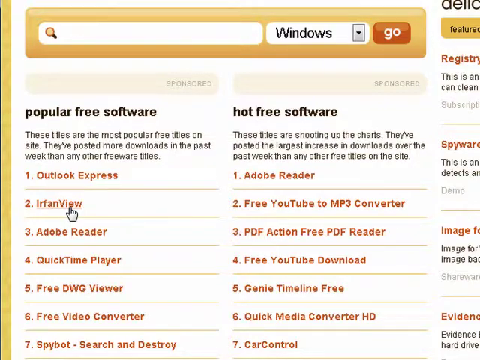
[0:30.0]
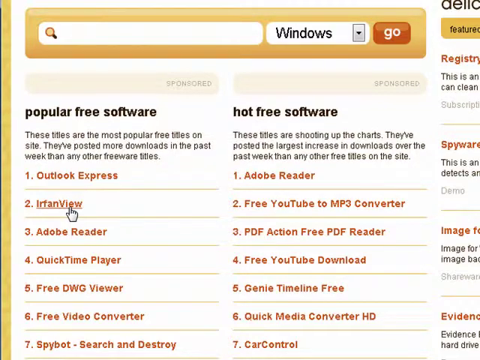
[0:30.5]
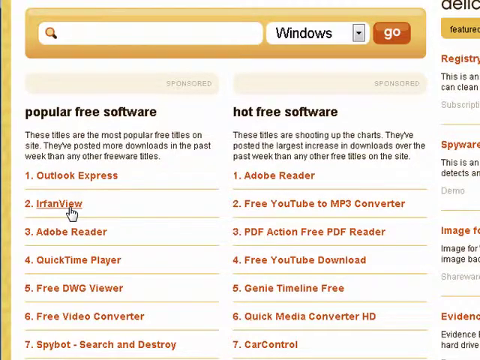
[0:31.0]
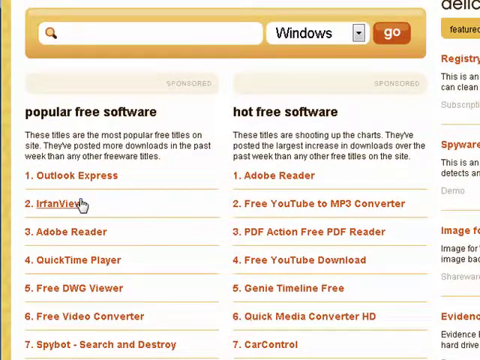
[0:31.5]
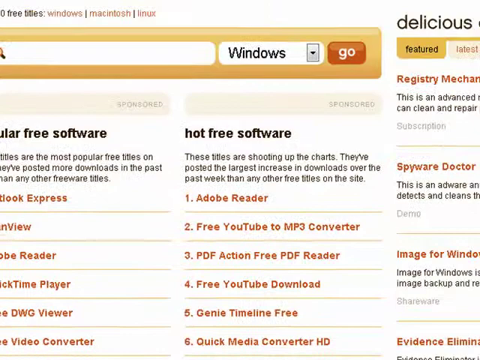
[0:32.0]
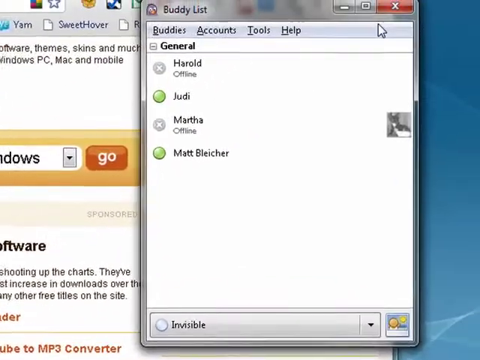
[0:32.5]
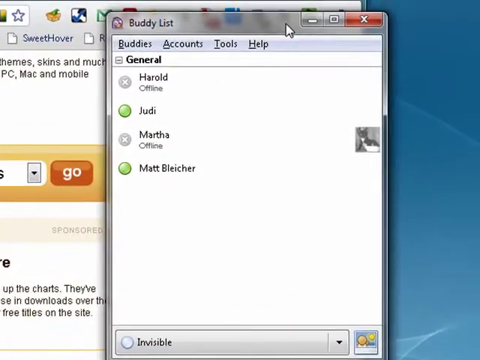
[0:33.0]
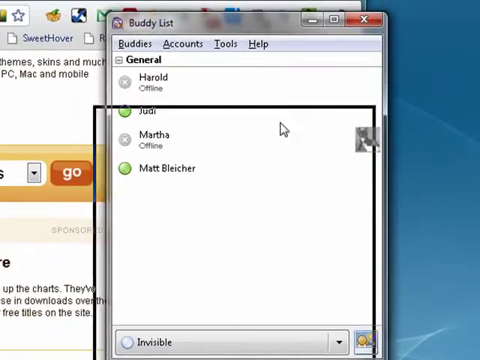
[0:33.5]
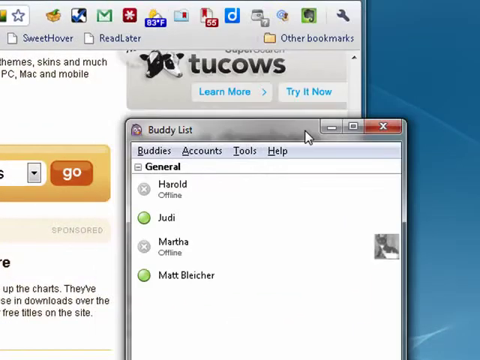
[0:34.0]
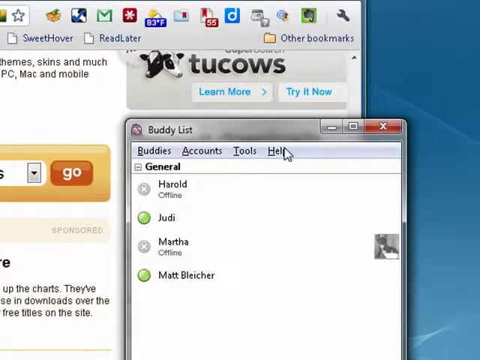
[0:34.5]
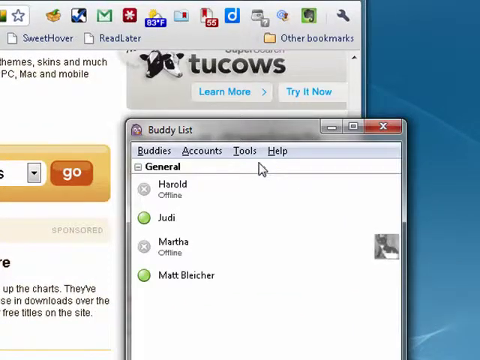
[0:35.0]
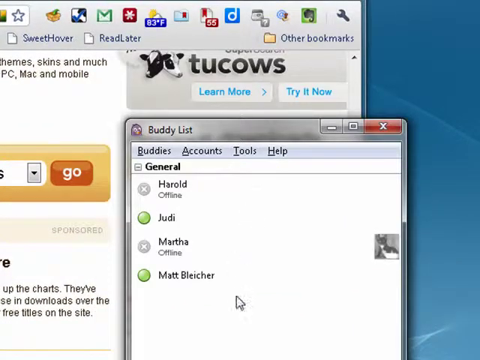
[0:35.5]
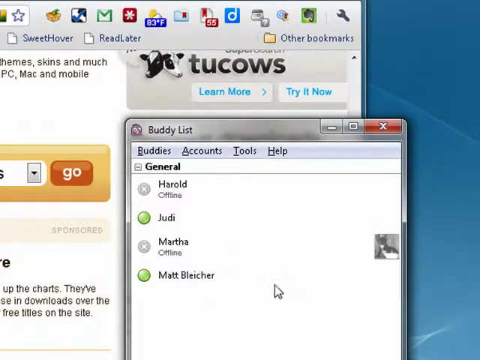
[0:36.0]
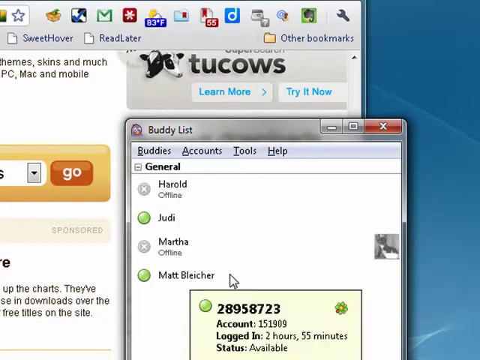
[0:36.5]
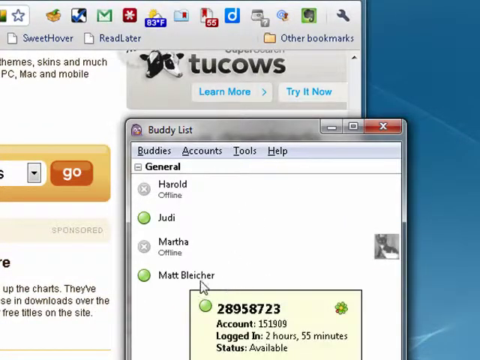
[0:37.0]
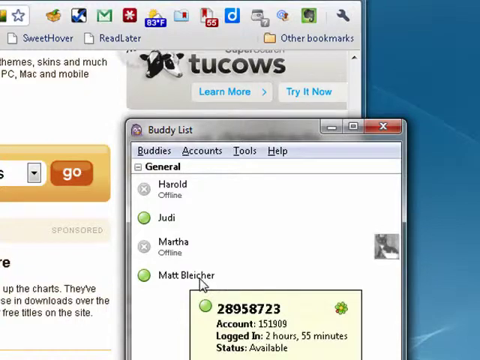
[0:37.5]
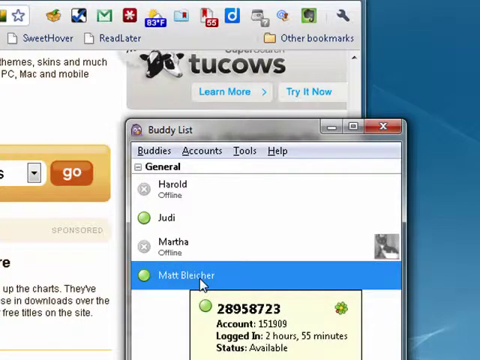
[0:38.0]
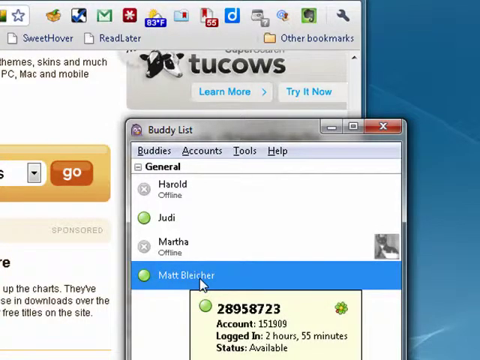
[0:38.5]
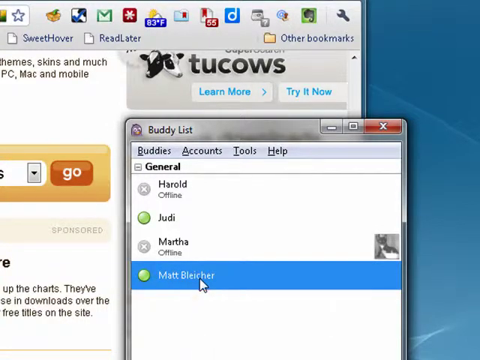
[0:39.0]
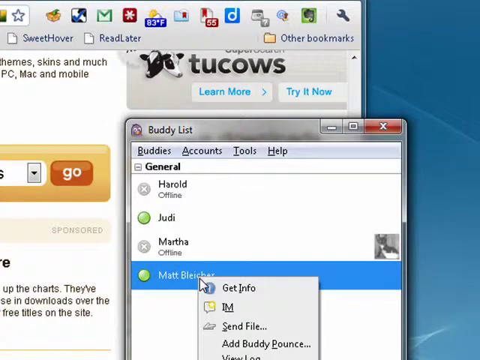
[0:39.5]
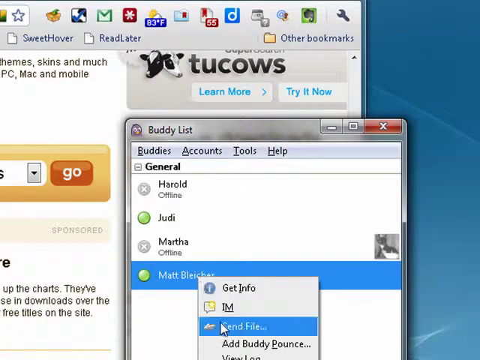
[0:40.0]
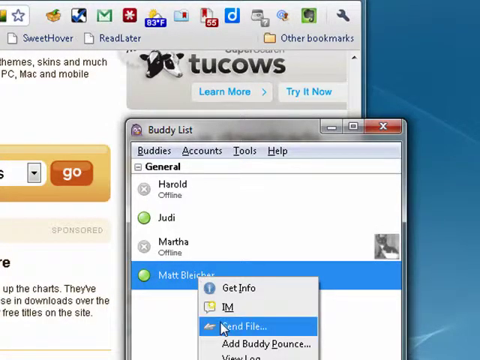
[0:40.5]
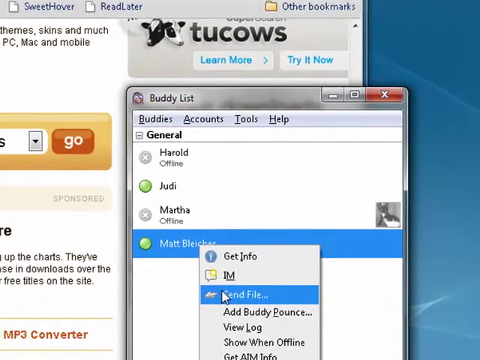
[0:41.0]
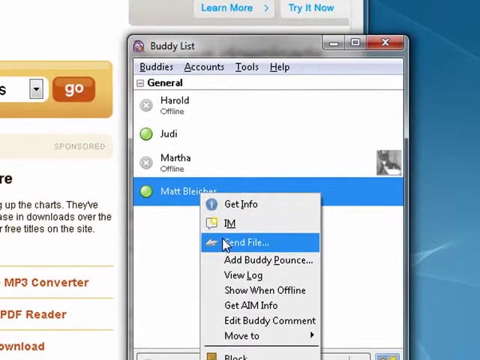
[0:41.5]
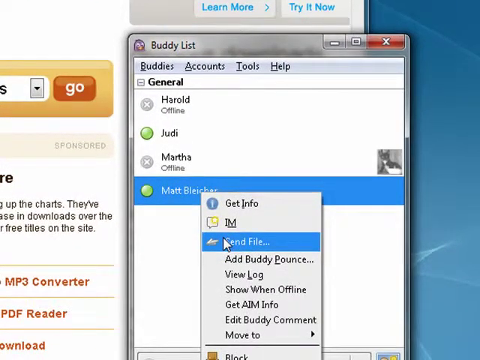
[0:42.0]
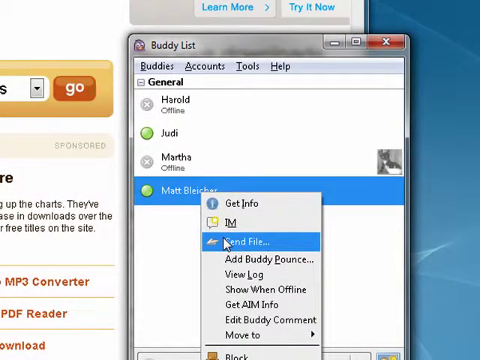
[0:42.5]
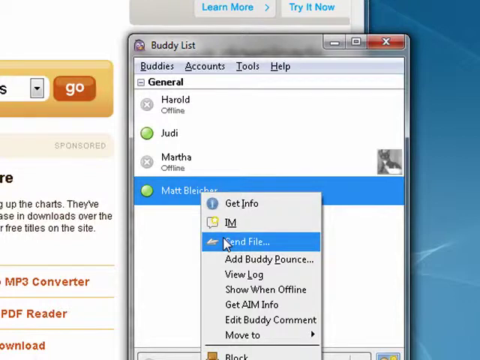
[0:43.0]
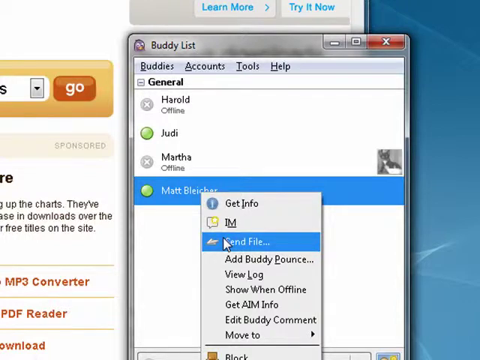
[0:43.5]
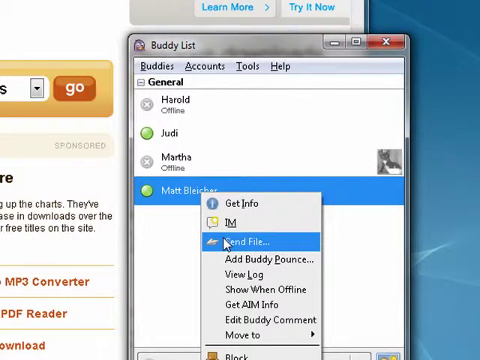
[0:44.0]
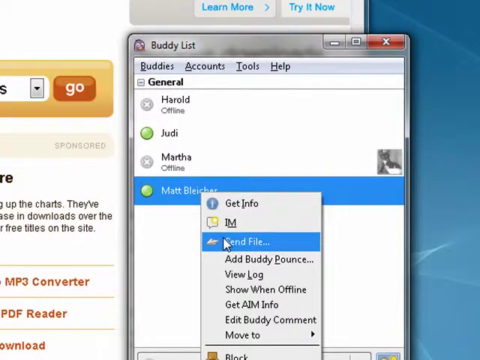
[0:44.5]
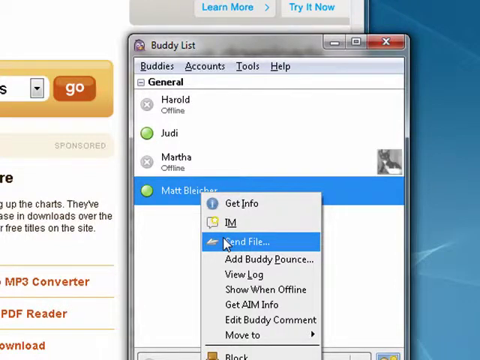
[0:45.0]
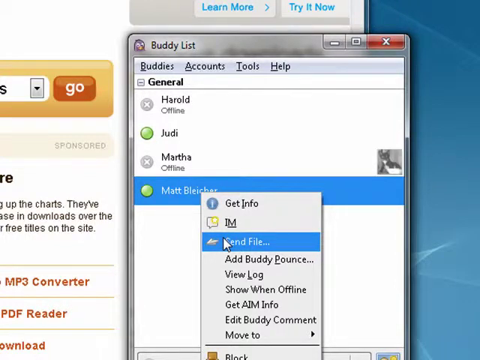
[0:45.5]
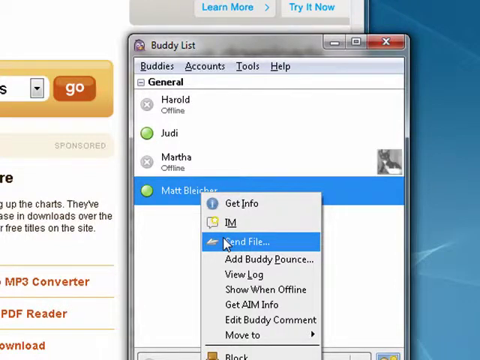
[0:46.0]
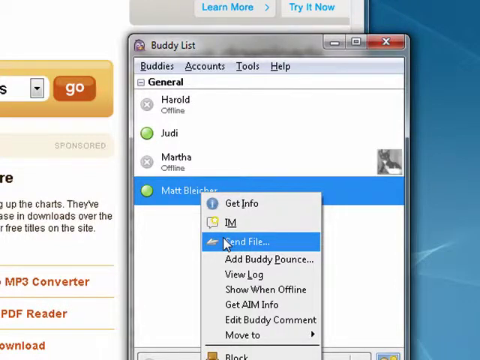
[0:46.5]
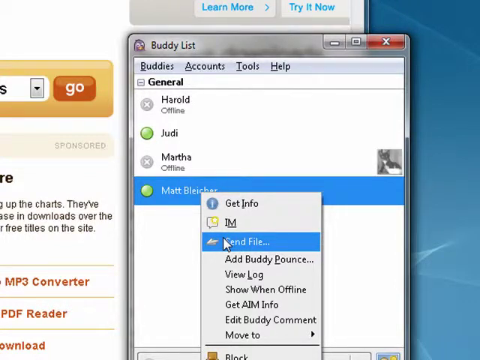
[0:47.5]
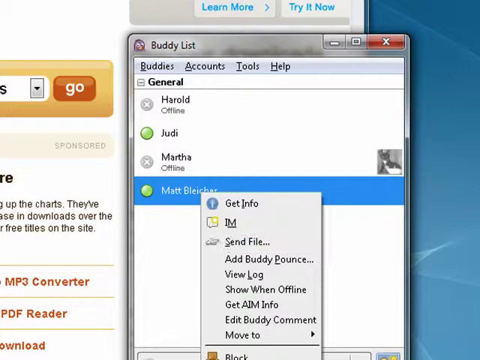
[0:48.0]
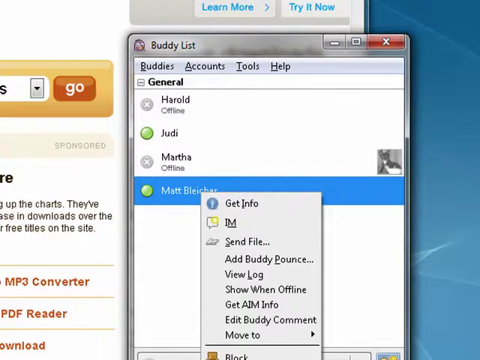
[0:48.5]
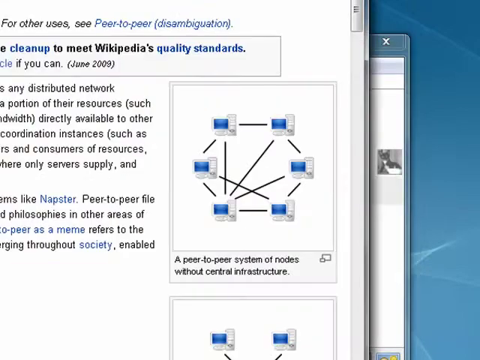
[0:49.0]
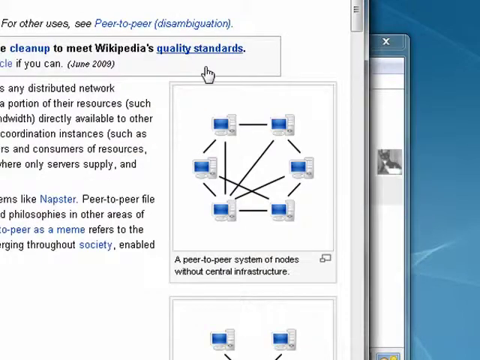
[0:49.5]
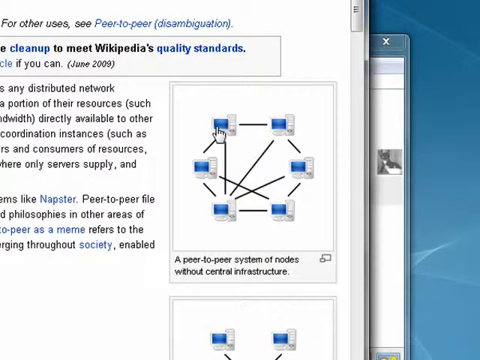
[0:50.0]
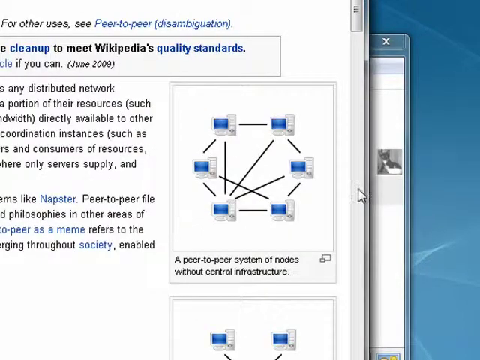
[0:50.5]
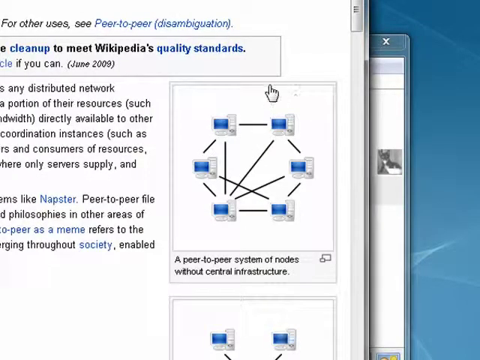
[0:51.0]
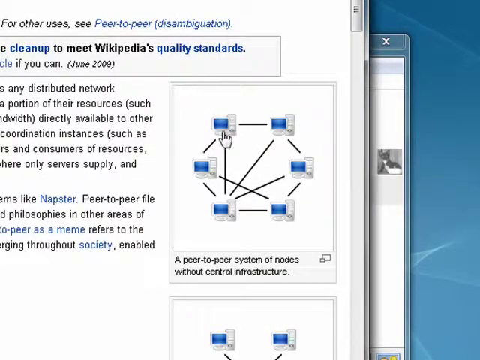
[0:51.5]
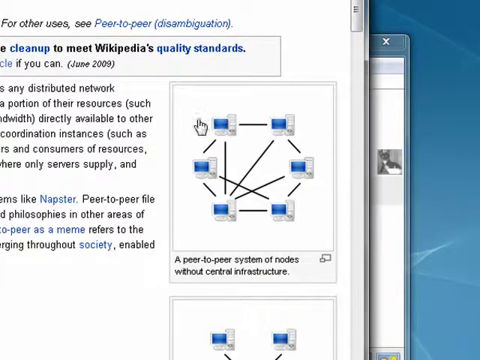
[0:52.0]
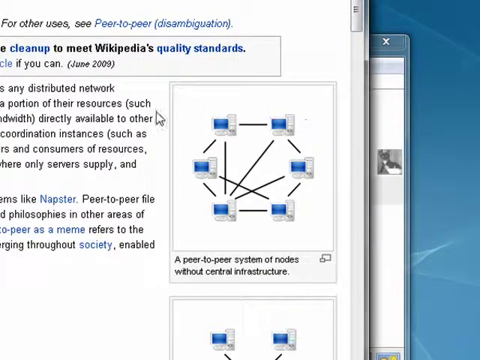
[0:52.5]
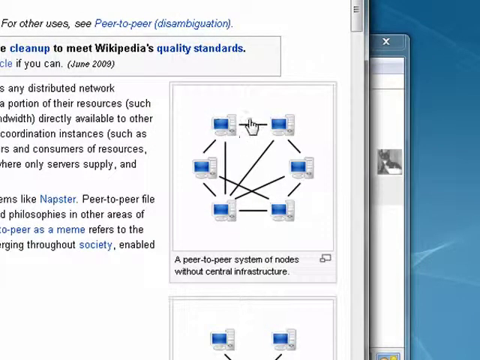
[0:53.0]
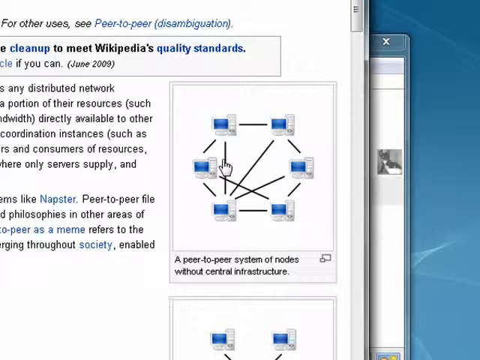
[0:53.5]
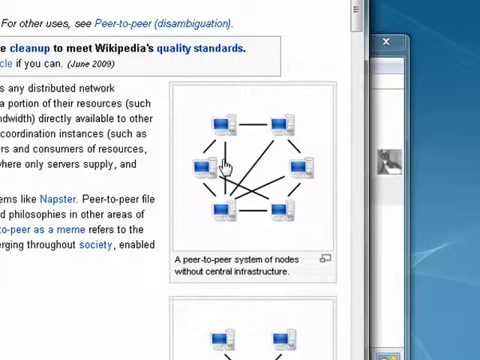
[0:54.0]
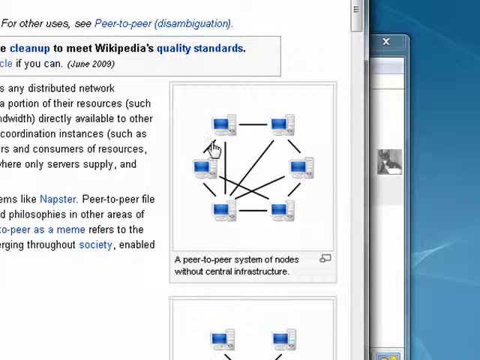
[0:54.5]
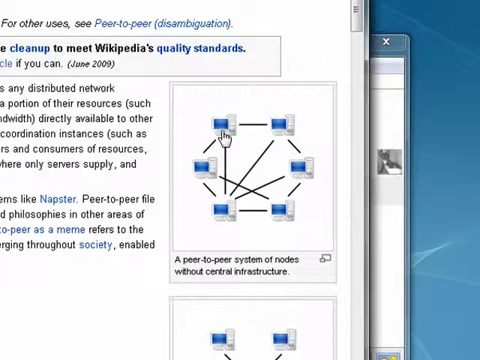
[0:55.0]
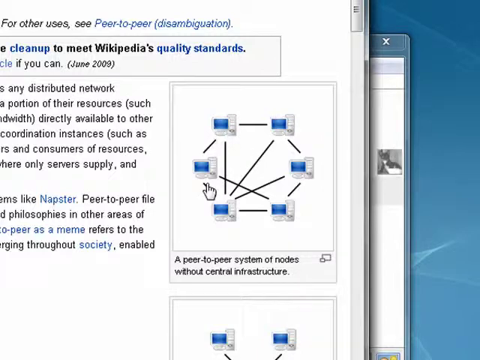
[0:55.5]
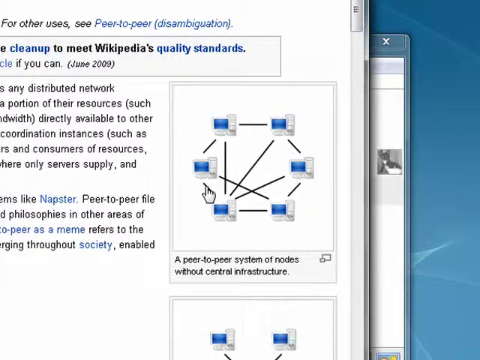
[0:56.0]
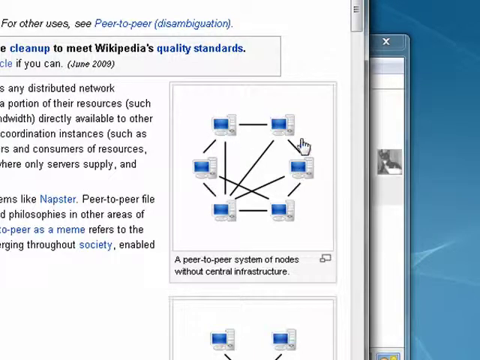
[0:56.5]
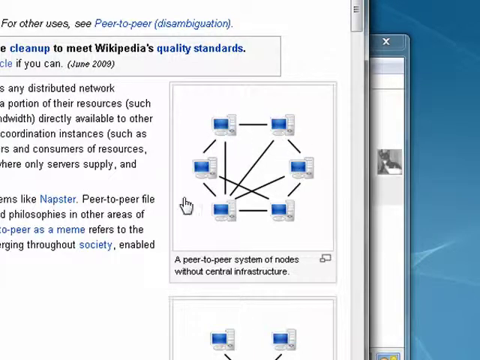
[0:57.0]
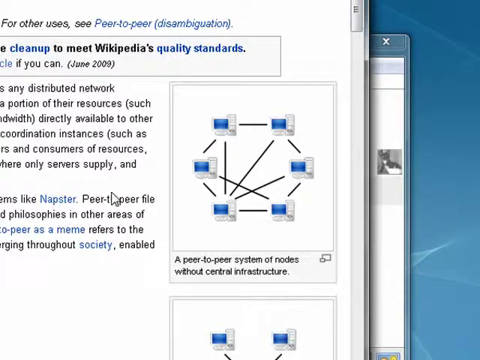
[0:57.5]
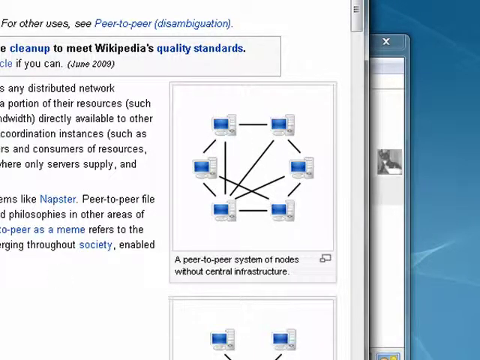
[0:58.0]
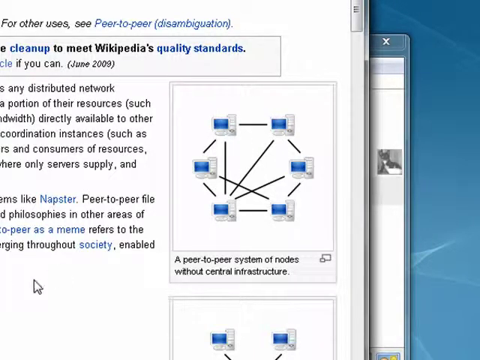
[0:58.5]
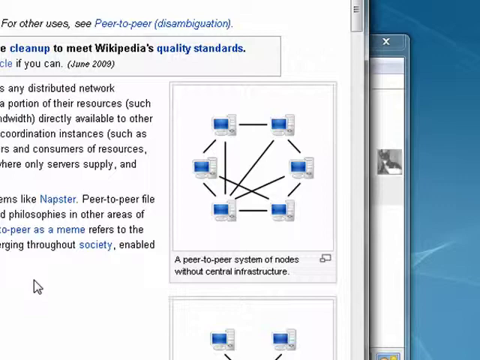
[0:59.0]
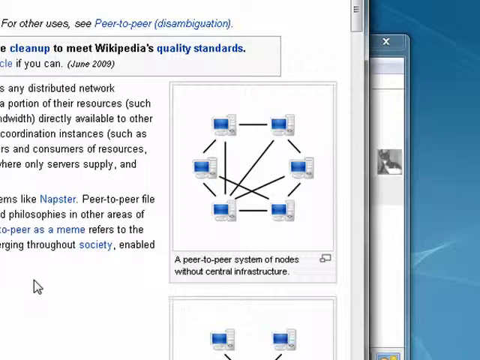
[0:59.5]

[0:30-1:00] A window or page that says "Windows" appears, with one search tab and a search bar beside it; it looks like a software search page, with Windows as the platform being searched. Underneath the bar it says "Popular Free Software" and "these titles are the most popular free titles on the site." The numbered list reads: number one, Outlook Express; number two, IrfanView; number three, Adobe Reader; number four, QuickTime; number five, Free DWG Viewer; and number six, Free Video Converter. The author has clicked on IrfanView at the very beginning, then scrolls over to the side to show a buddy list with Harold, Judy, Martha, and Matt Bleacher. To send Matt Bleacher a file, they click on File in the context menu and then highlight the image on the peer-to-peer page that looks like computers connected together.